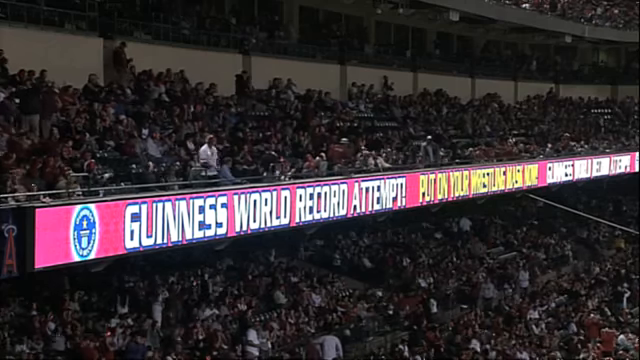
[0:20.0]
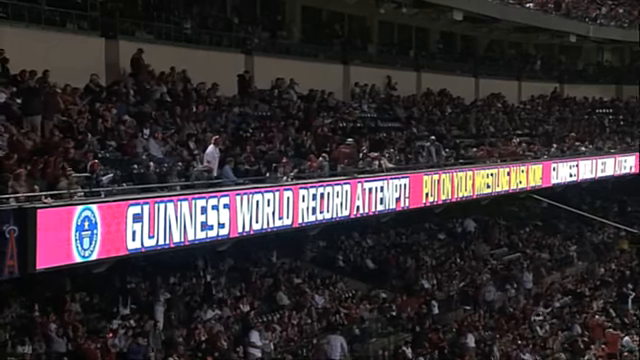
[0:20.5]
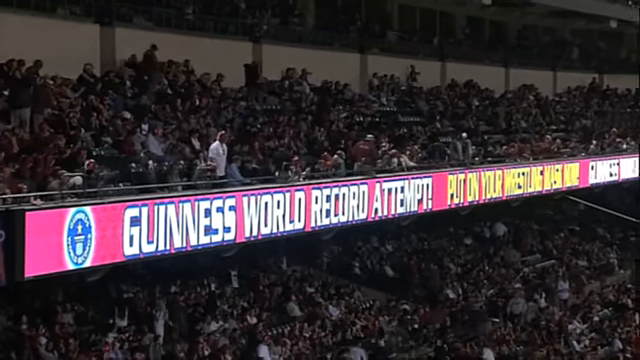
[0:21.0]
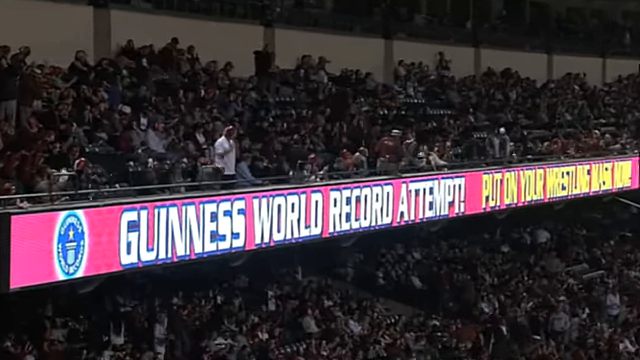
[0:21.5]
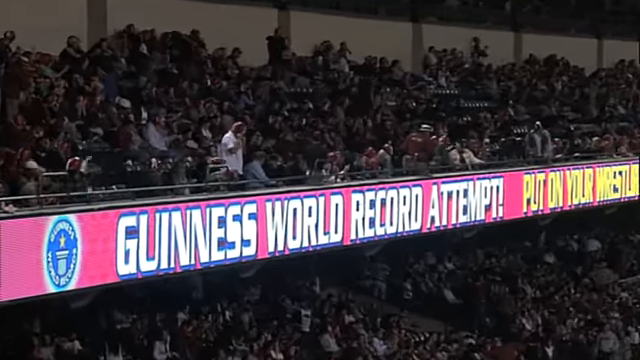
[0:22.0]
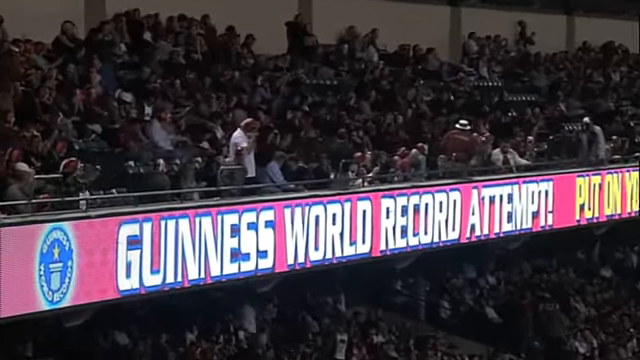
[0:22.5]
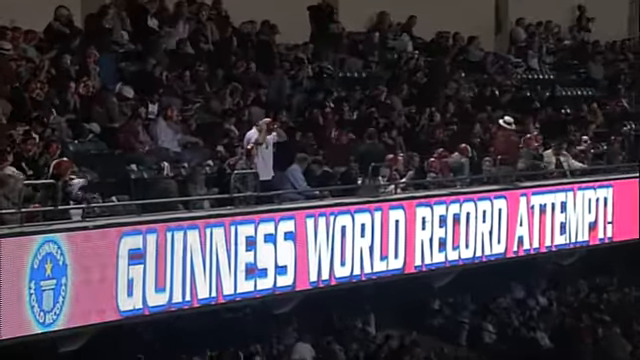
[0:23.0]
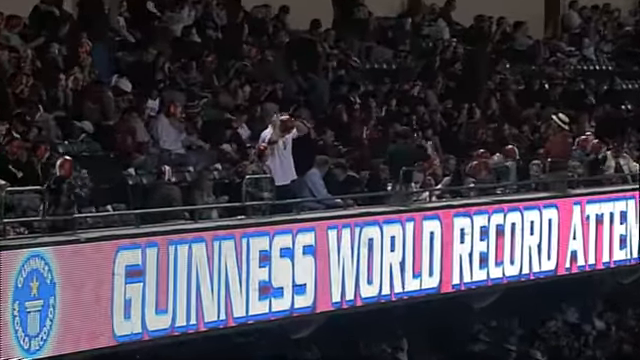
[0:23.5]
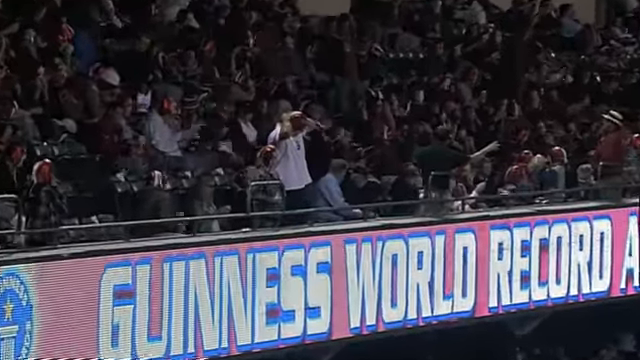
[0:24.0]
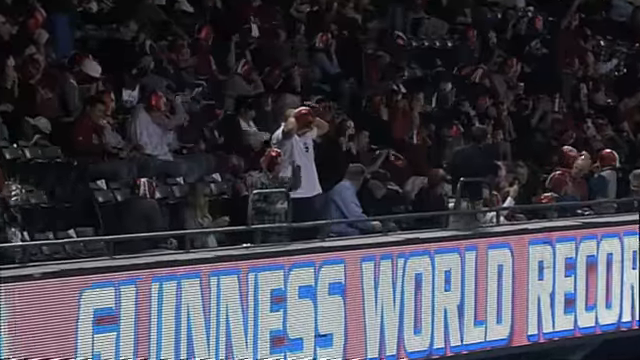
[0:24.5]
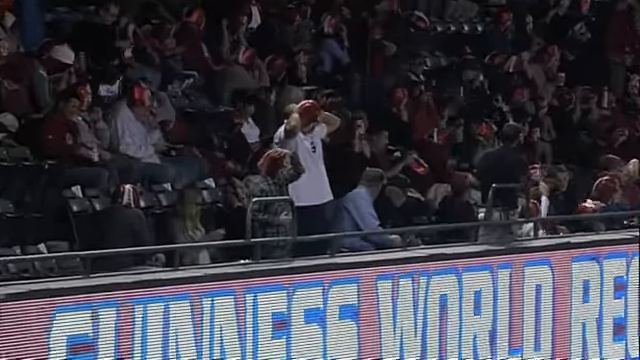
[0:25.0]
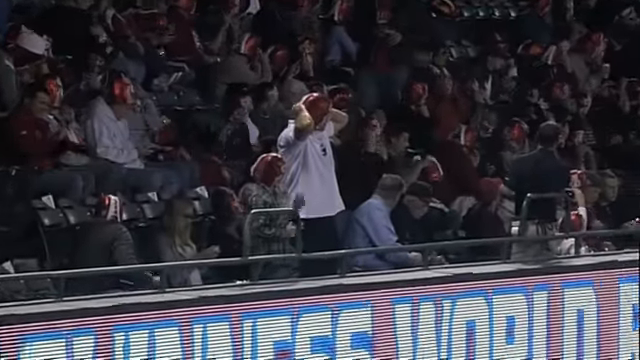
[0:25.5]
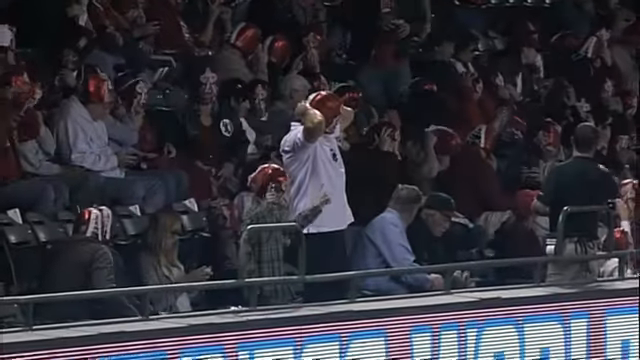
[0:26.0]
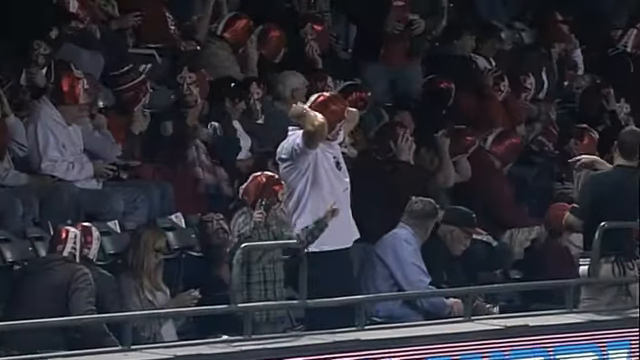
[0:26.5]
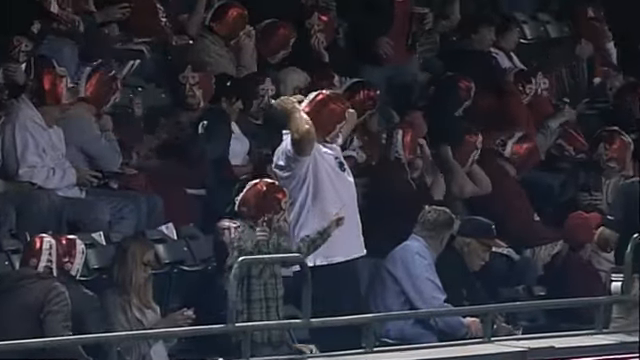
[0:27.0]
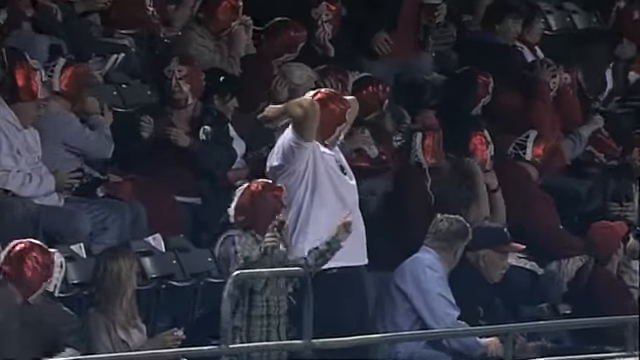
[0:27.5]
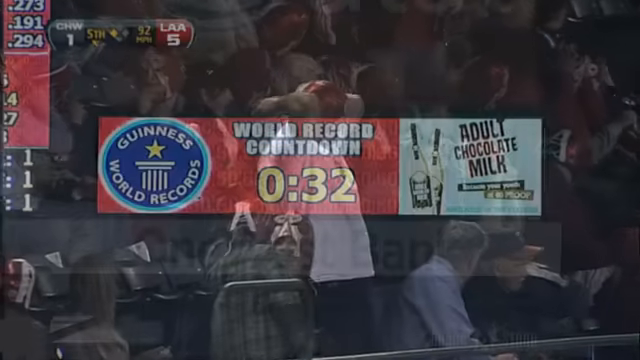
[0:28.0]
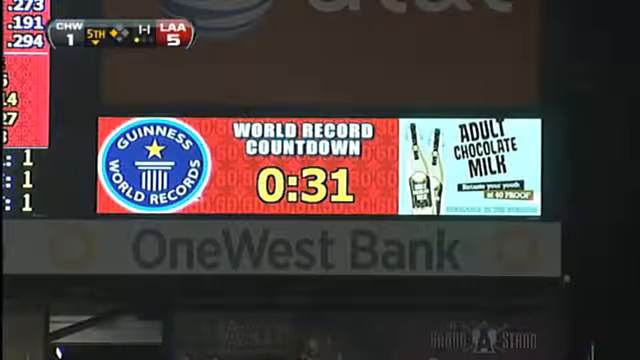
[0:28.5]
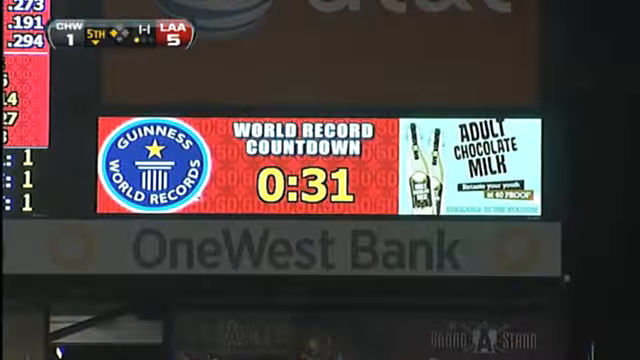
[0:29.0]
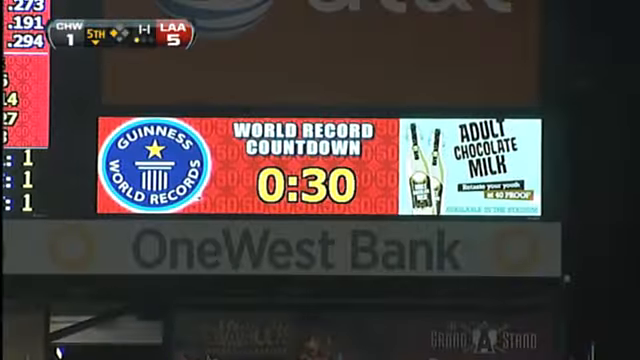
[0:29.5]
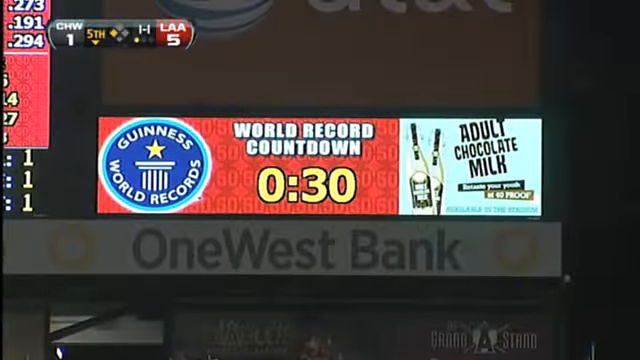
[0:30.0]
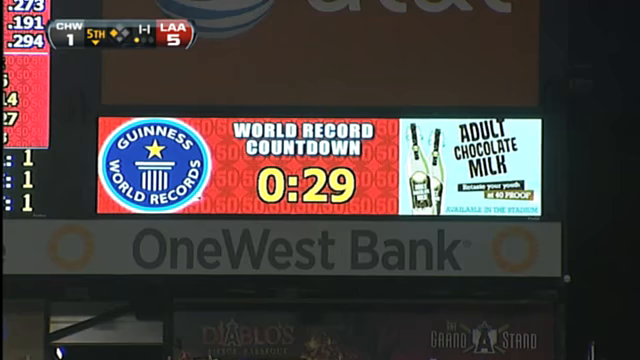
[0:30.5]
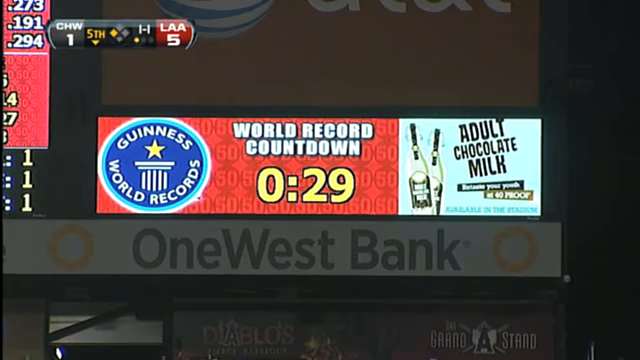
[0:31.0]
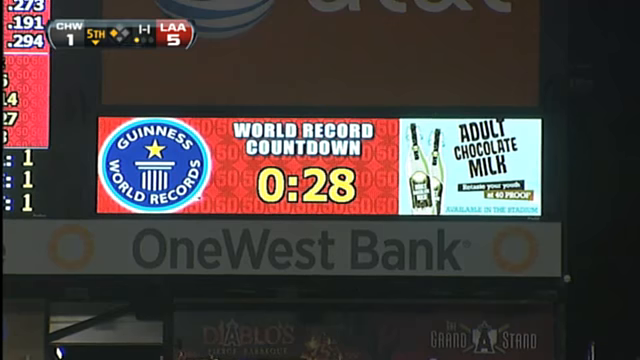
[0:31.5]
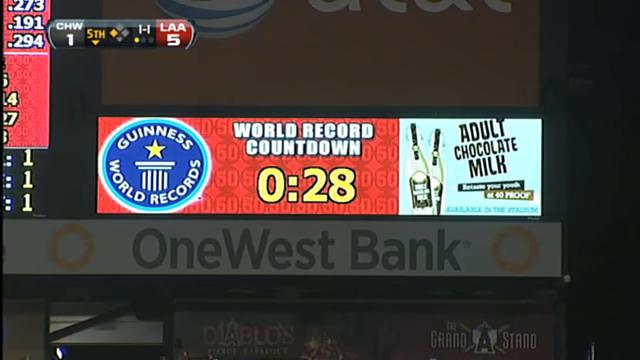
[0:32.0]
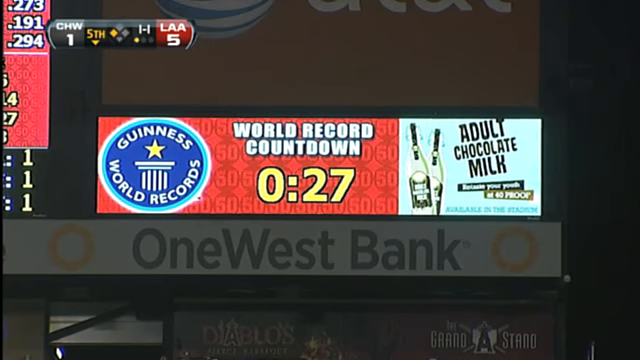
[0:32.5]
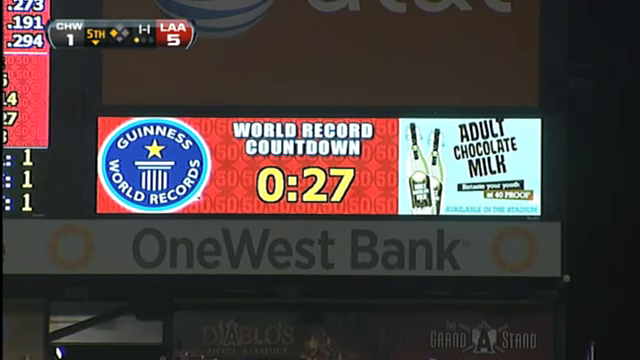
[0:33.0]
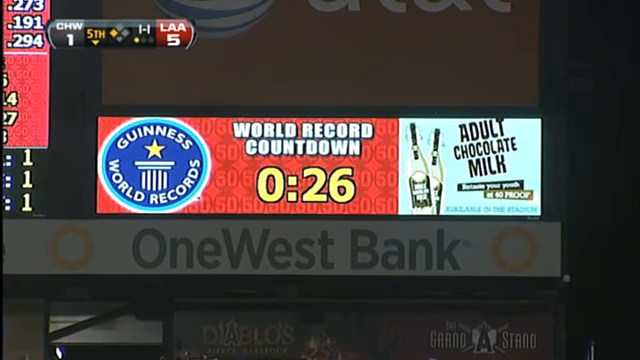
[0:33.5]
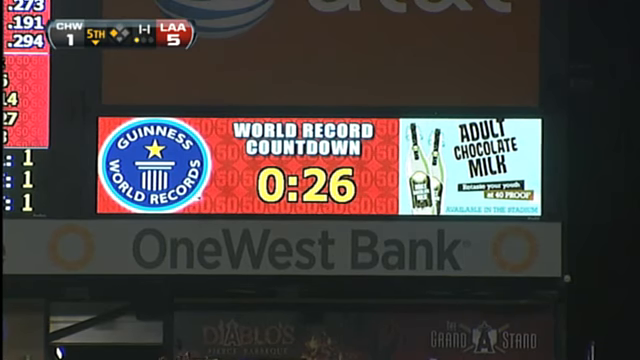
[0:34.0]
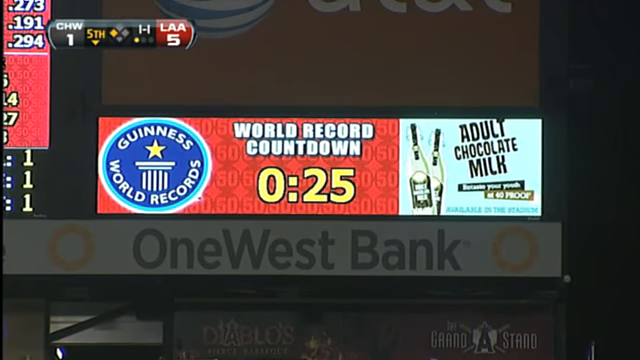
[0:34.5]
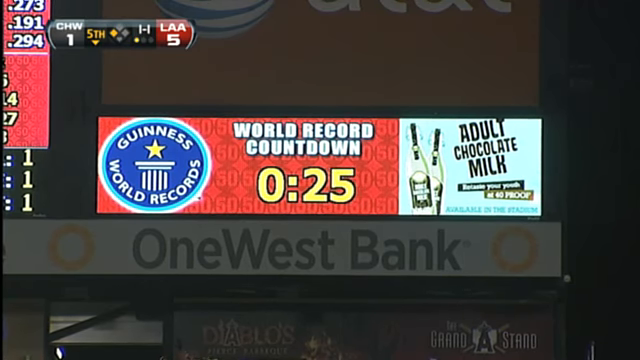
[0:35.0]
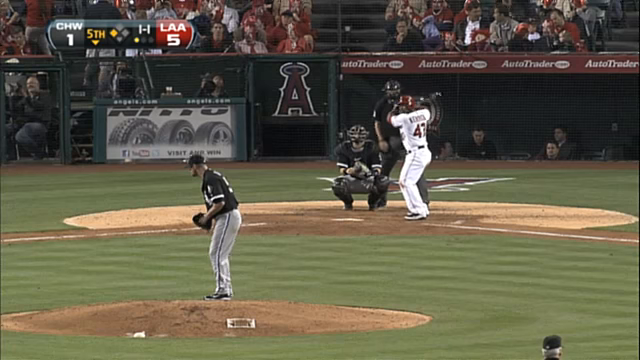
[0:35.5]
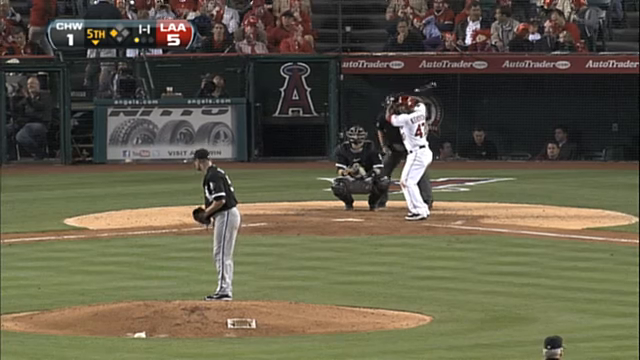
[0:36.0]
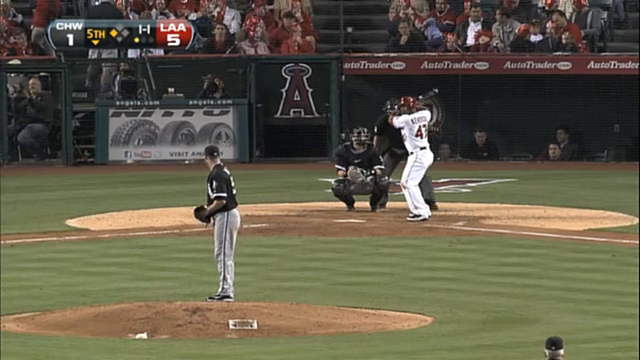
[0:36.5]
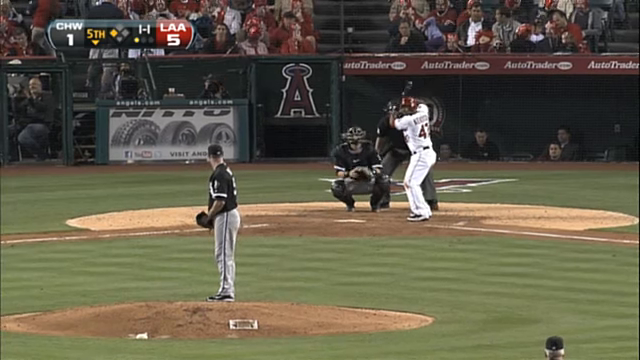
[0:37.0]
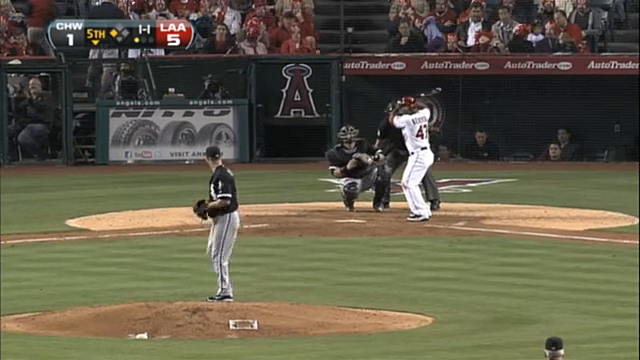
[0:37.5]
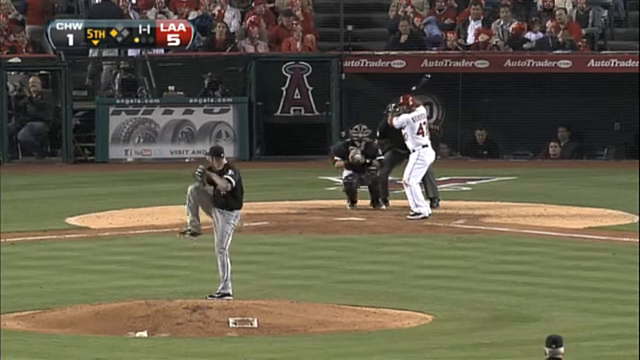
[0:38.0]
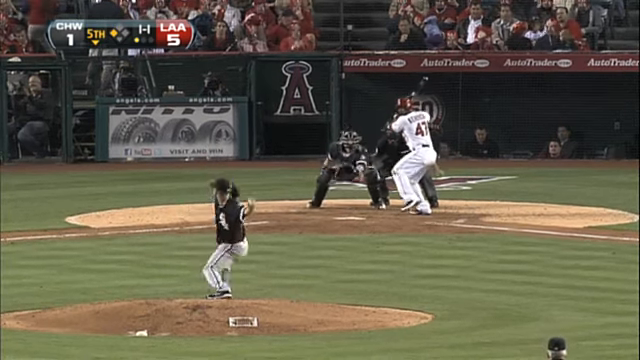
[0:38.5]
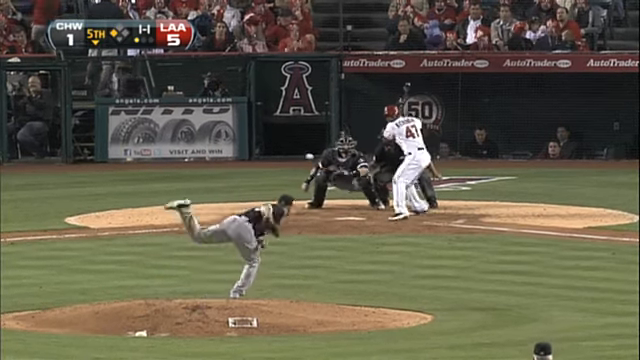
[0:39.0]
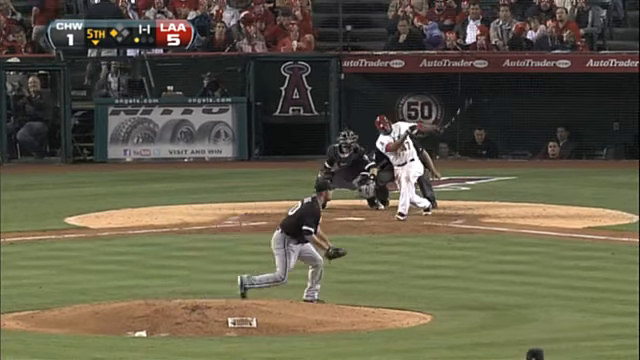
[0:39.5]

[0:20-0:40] Fans at a professional baseball game between the Chicago White Sox and the Los Angeles Angels, apparently in Los Angeles, are shown. A group of fans in one of the upper decks is cheering, and just below them is an illuminated sign that reads "Guinness World Record attempt," along with some other text that cannot be made out. The camera pans in to a couple of audience members who are standing up, one of them a man wearing a white shirt; everybody is very excited and cheering. Next comes a clock next to the scoreboard, illuminated with the Guinness World Records logo, reading "world record countdown" and counting down from 31 seconds. The scene then shifts to a pitcher throwing the baseball to the catcher, and the batter hits the ball into left field; the batter appears to be an Angels batter.